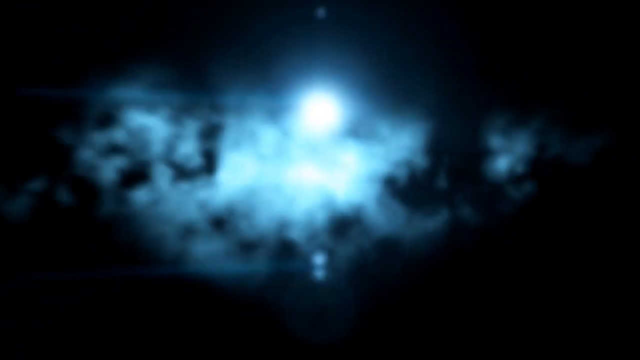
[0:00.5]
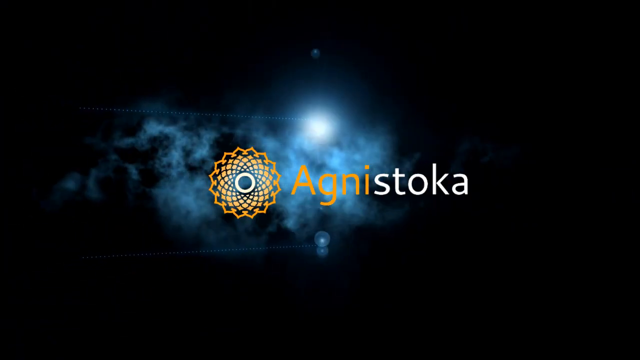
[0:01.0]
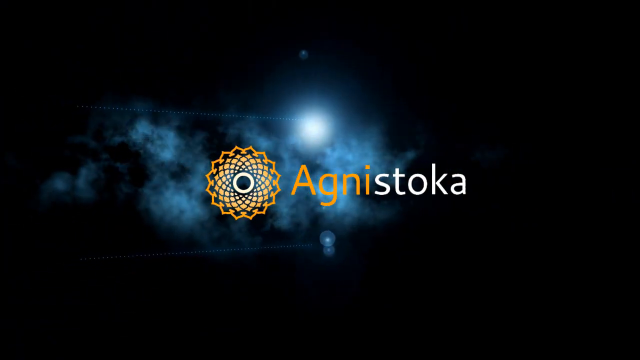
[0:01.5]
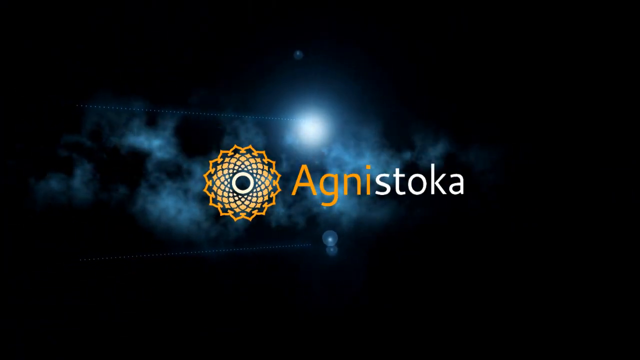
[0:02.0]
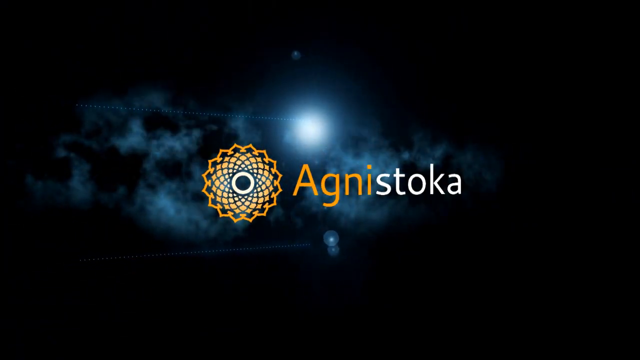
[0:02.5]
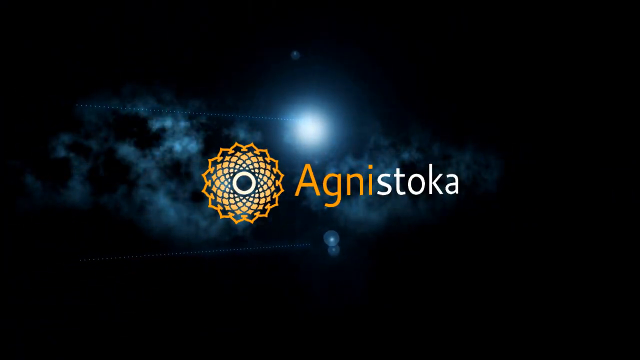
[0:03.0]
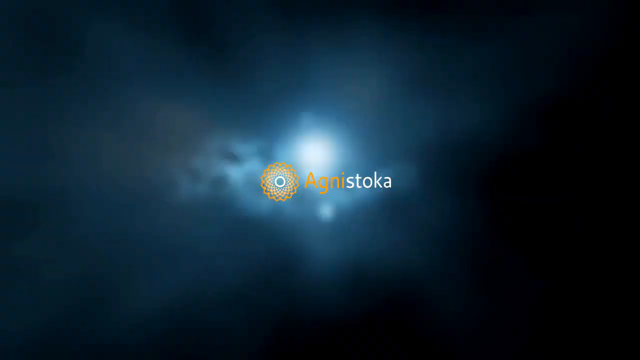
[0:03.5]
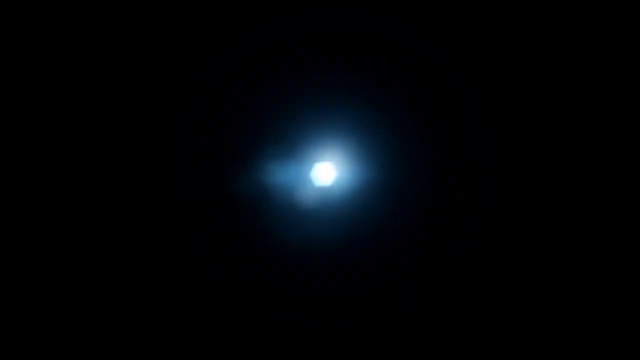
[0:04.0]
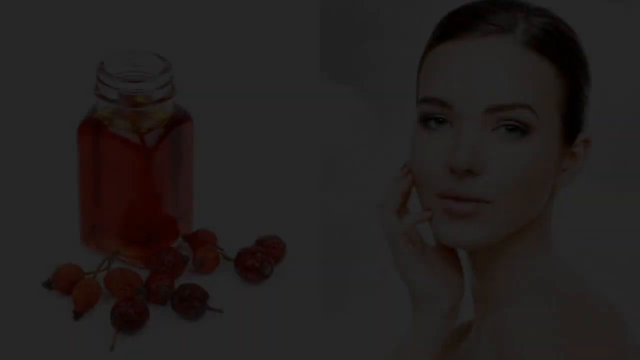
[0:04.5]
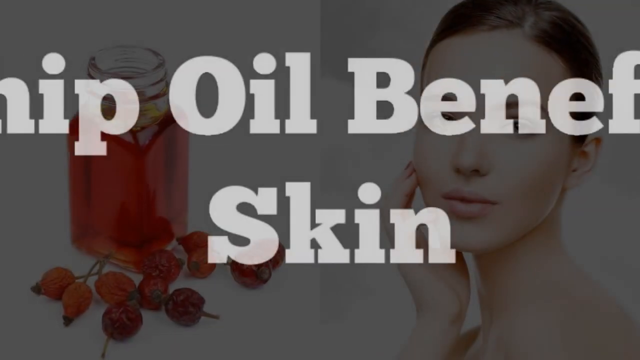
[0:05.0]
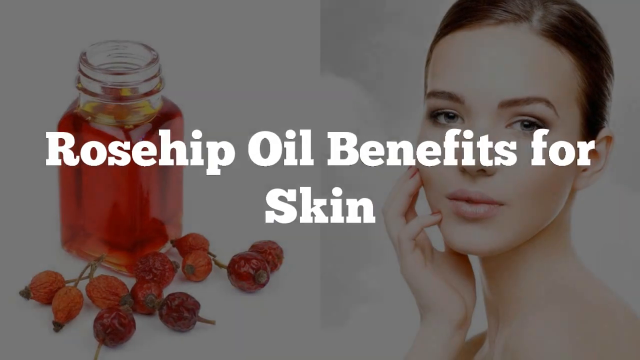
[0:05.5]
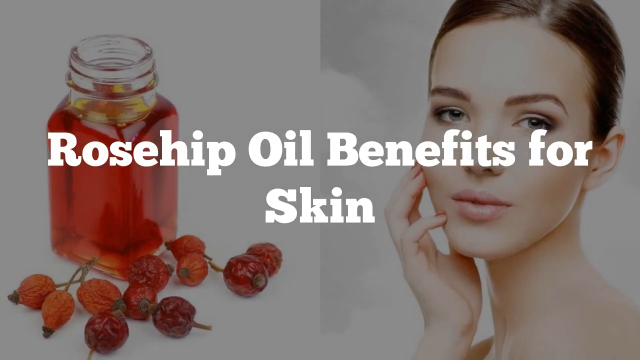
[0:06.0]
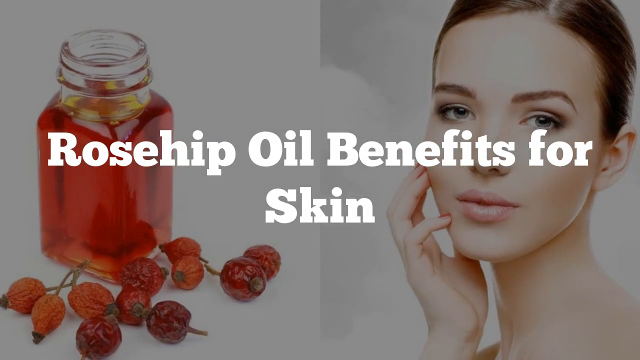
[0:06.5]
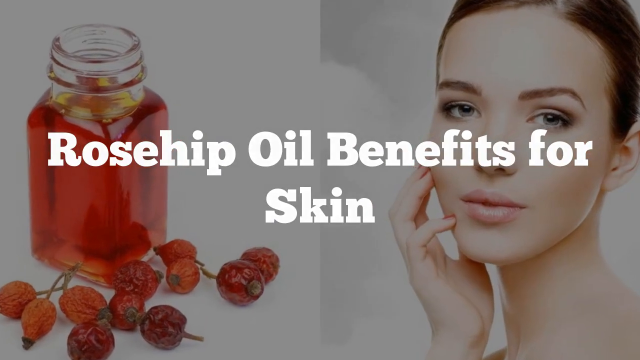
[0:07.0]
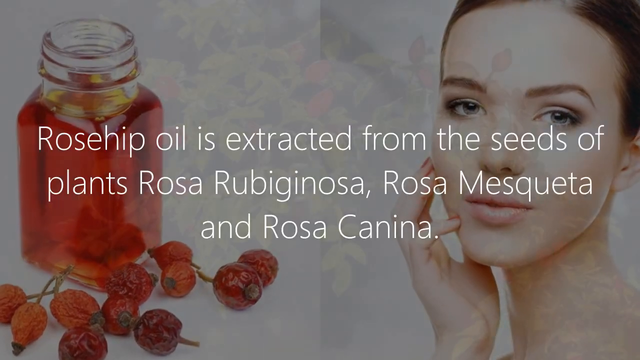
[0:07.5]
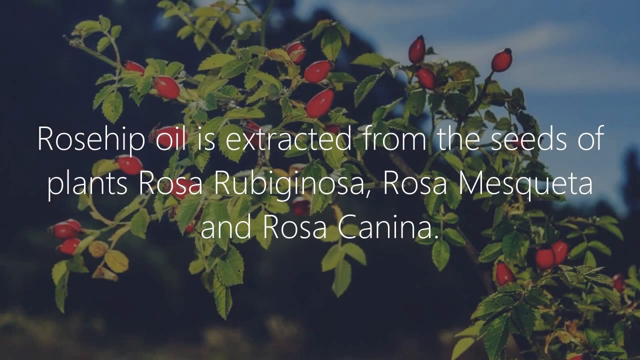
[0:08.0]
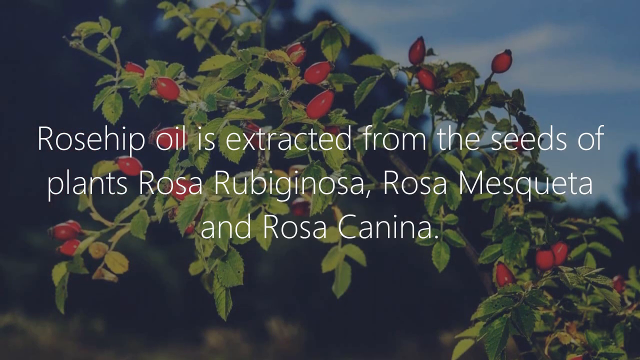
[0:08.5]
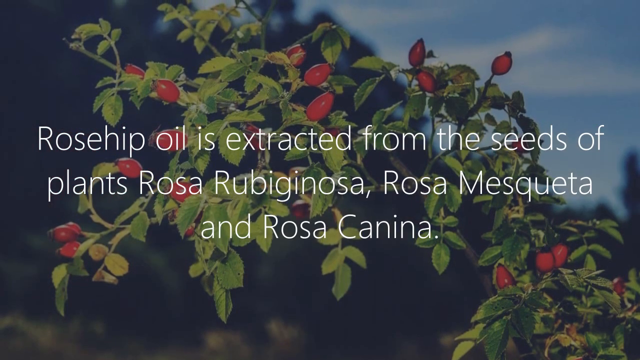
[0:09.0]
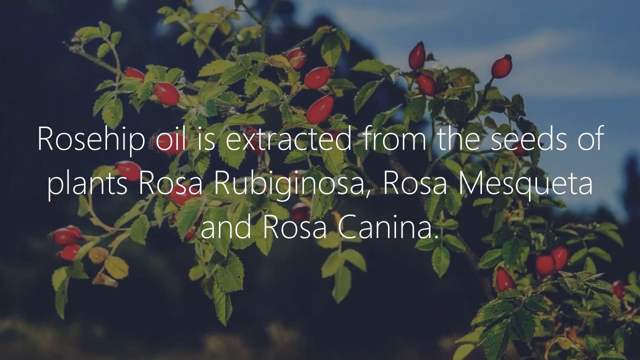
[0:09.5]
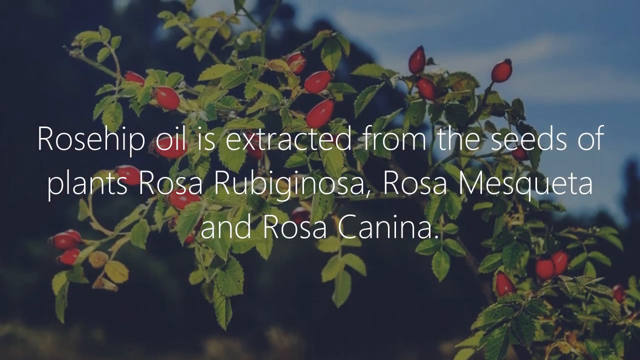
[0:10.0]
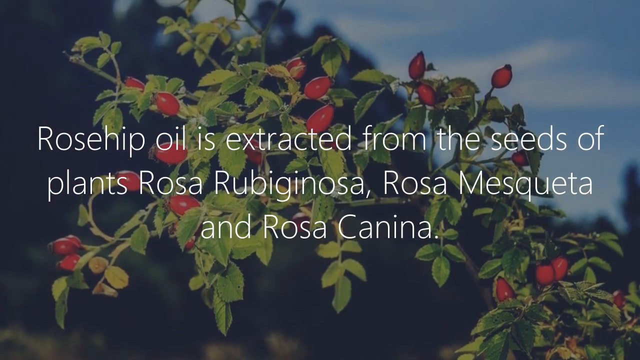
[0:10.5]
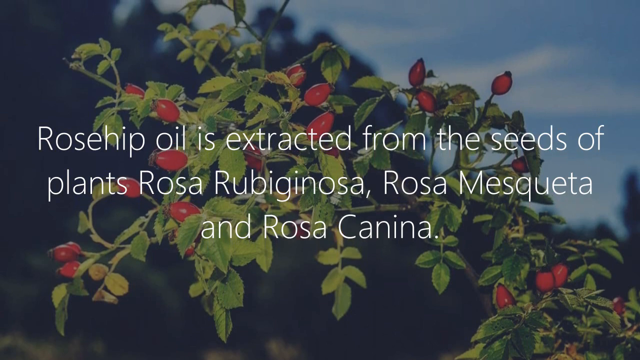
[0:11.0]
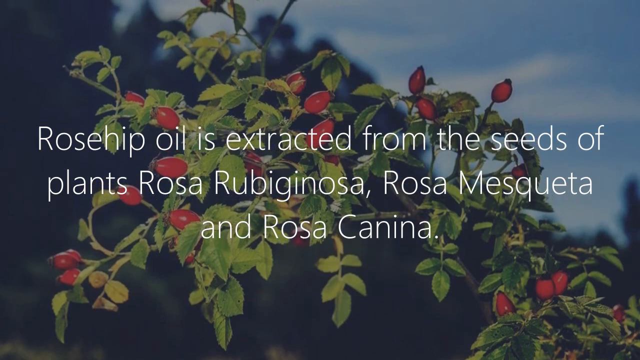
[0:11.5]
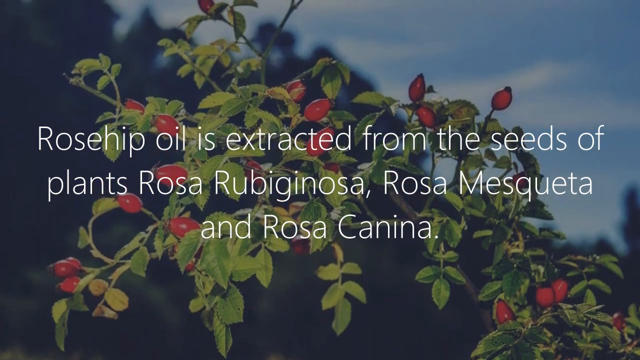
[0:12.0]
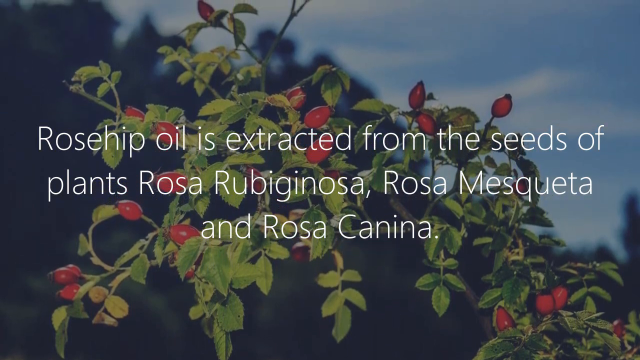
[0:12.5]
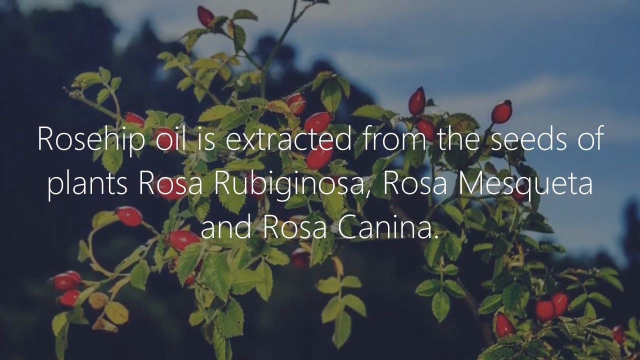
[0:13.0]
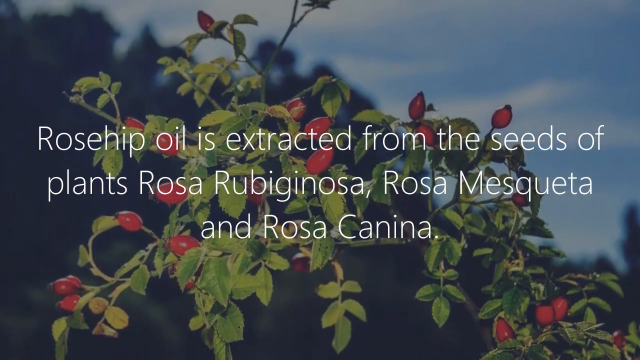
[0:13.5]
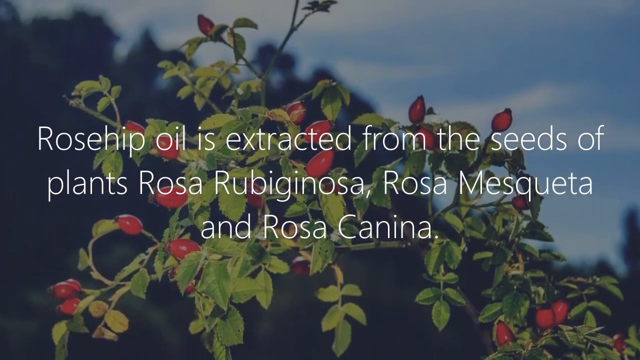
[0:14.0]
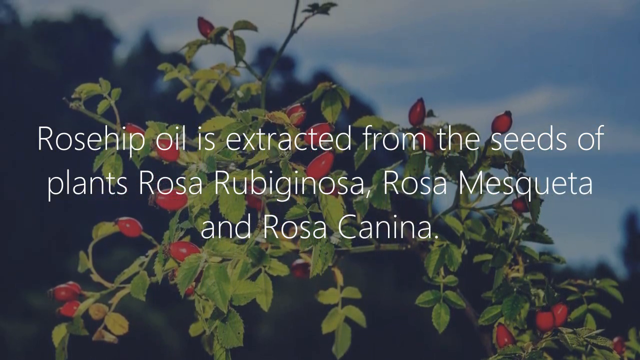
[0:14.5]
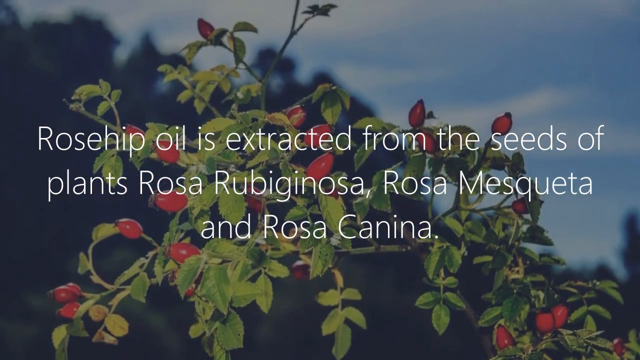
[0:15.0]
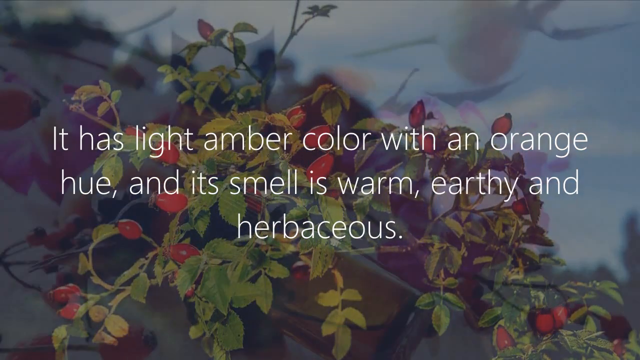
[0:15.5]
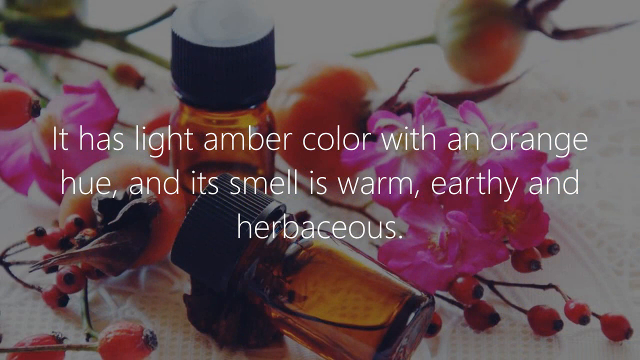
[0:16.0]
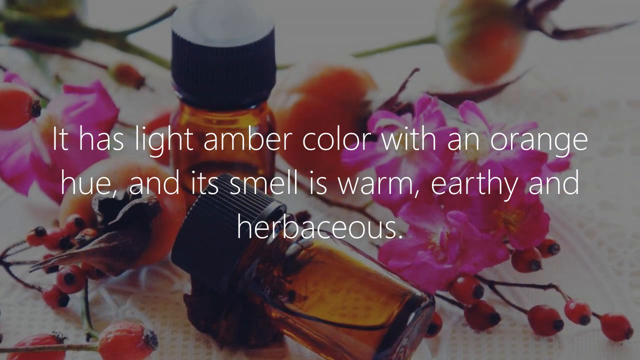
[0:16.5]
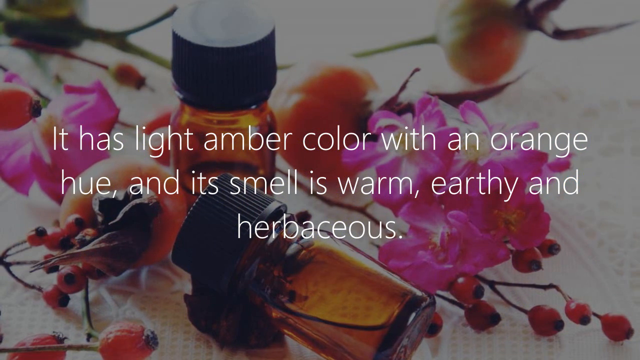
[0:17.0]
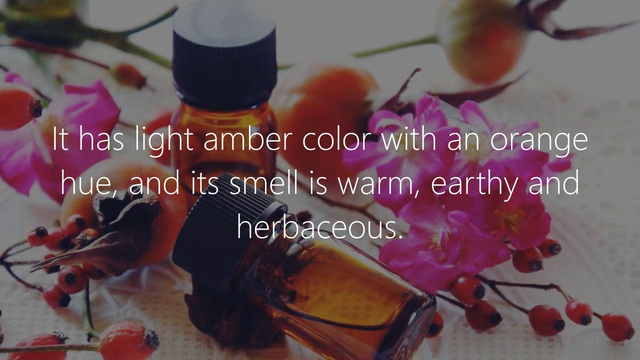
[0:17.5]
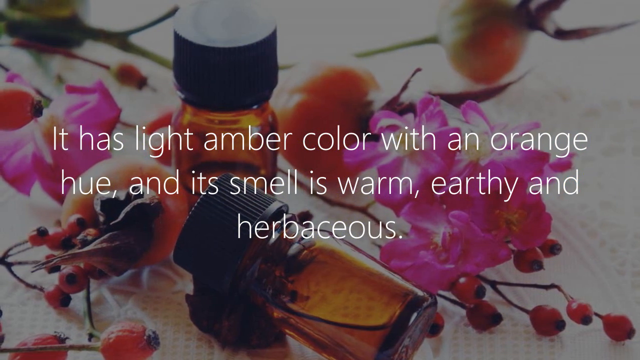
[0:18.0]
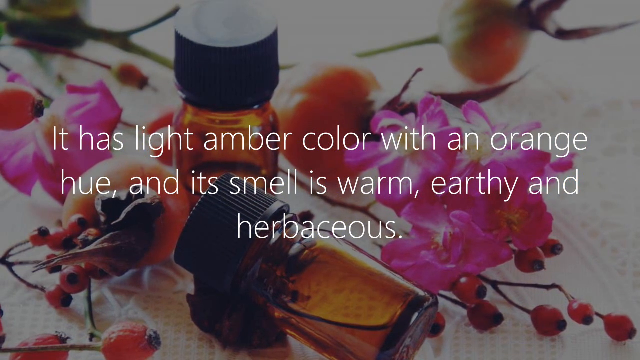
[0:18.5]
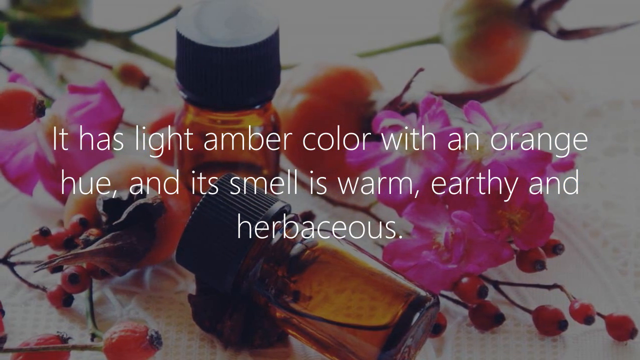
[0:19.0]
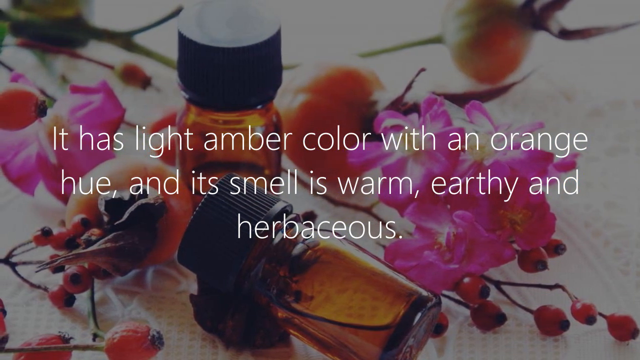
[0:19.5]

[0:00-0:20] The video is about rosehip oil benefits for skin. On the left side of the picture are the rose hip and the oil in a glass bottle or vase; the right side is supposed to show what the skin looks like after the oil is applied. The video states that rosehip oil is extracted from the seeds of the plants Rosa Rubiginosa, Rosa Musqueta and Rosa Canina, and a picture of the plant appears. Next, the oil is described as having a light amber color with an orange hue and a warm, earthy, herbaceous smell, and a picture shows it in solution form along with rose hip cuttings with the flowers attached.